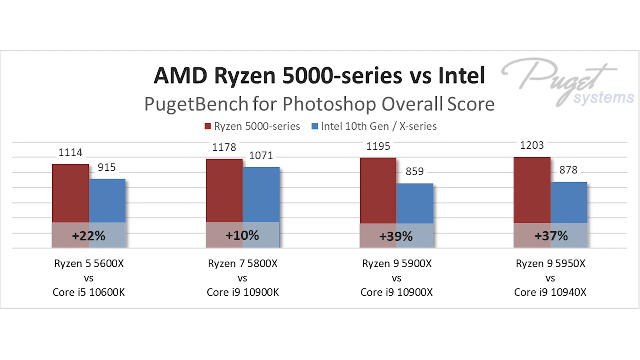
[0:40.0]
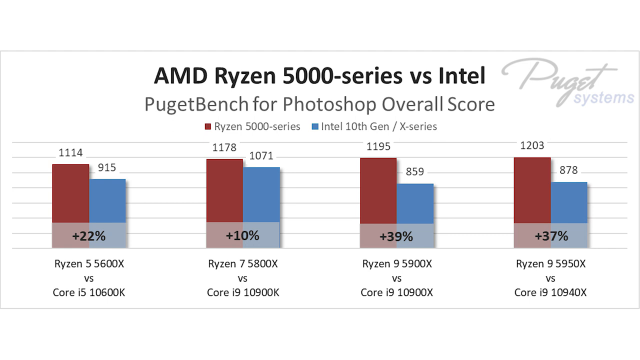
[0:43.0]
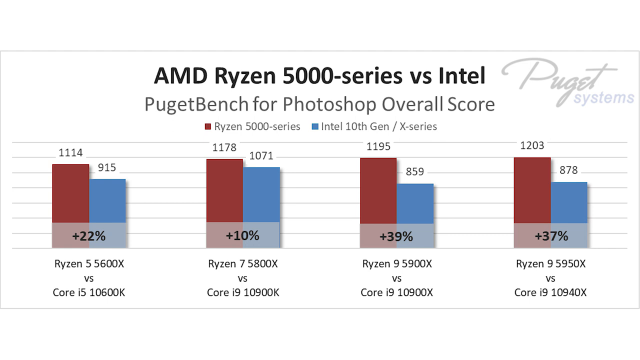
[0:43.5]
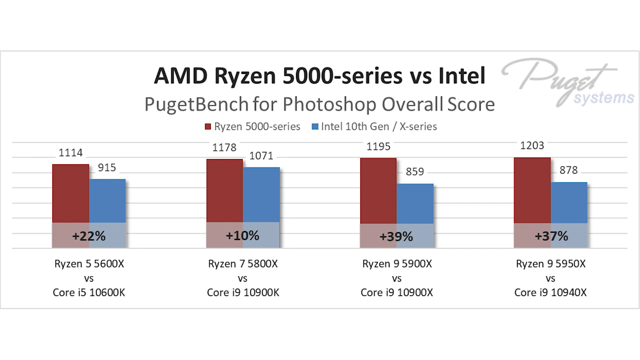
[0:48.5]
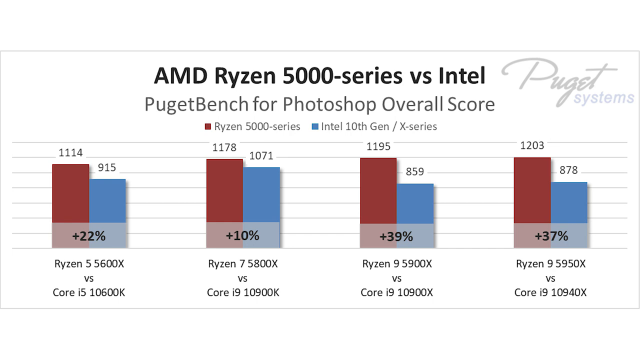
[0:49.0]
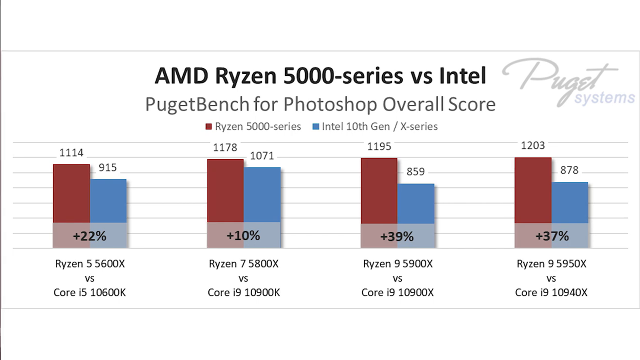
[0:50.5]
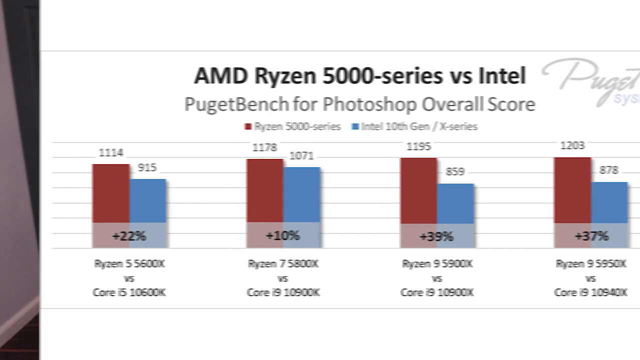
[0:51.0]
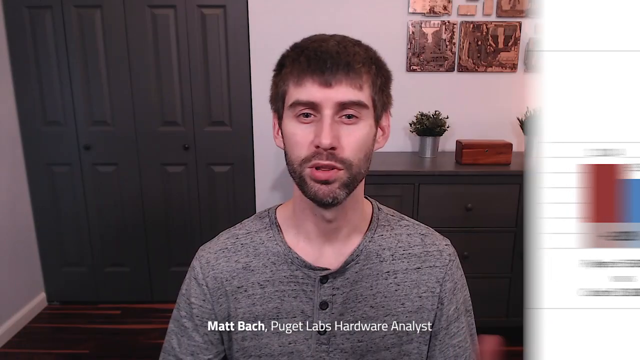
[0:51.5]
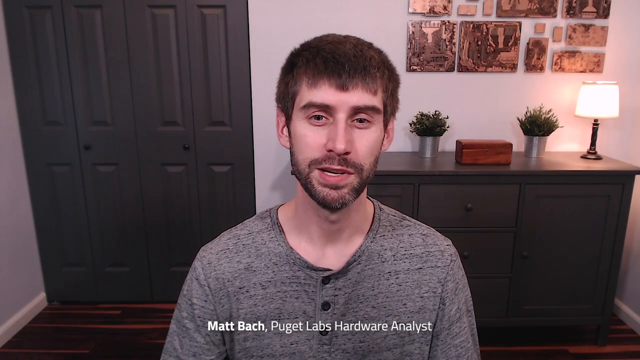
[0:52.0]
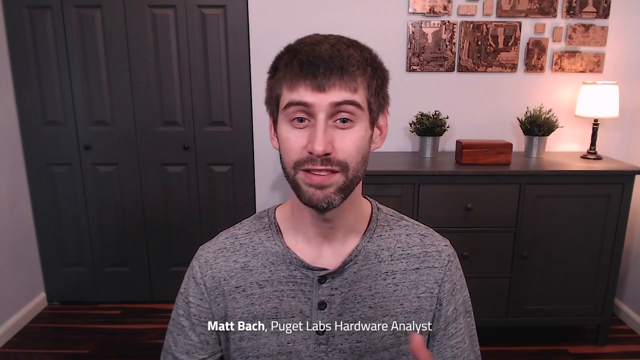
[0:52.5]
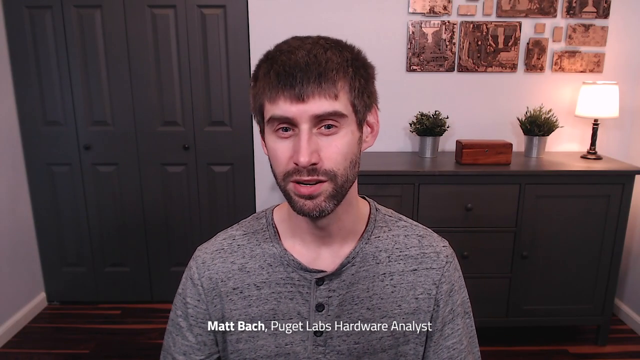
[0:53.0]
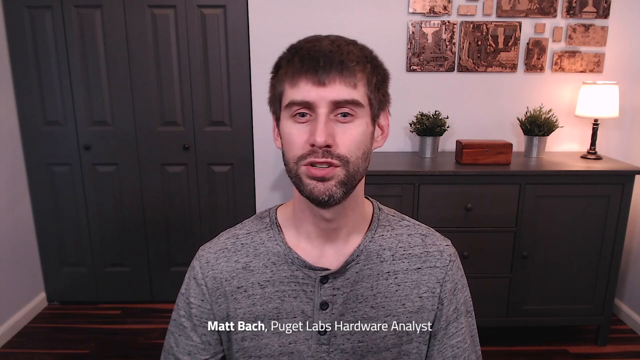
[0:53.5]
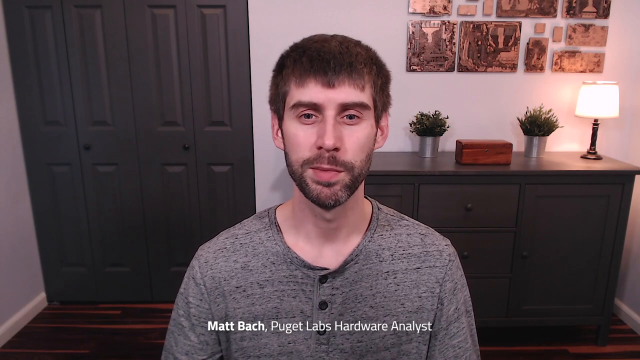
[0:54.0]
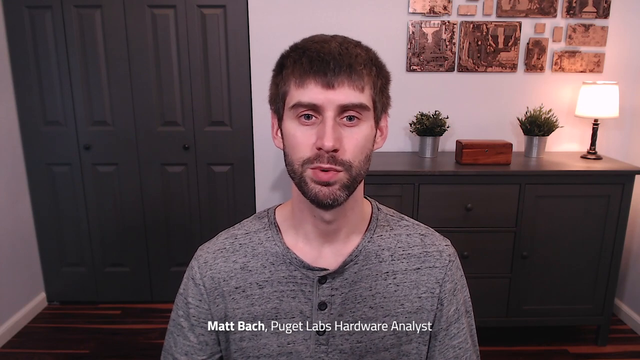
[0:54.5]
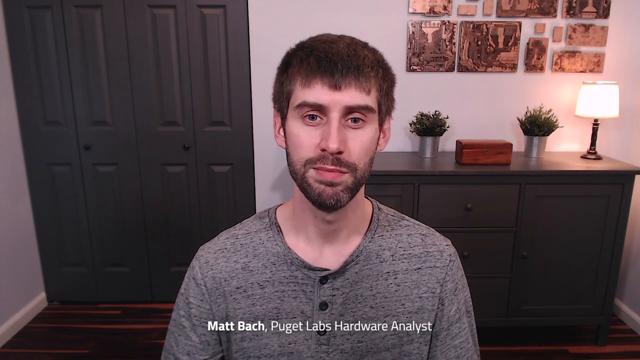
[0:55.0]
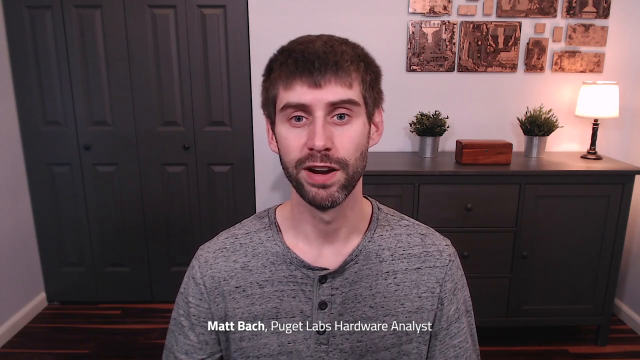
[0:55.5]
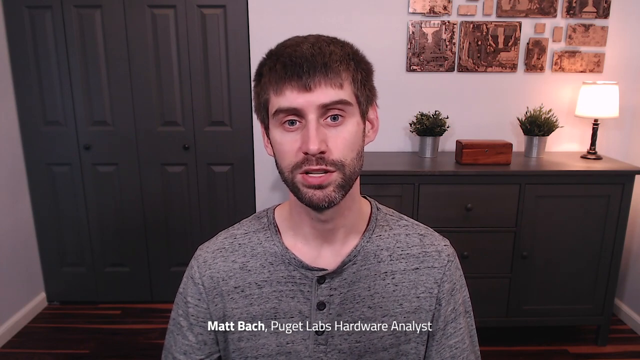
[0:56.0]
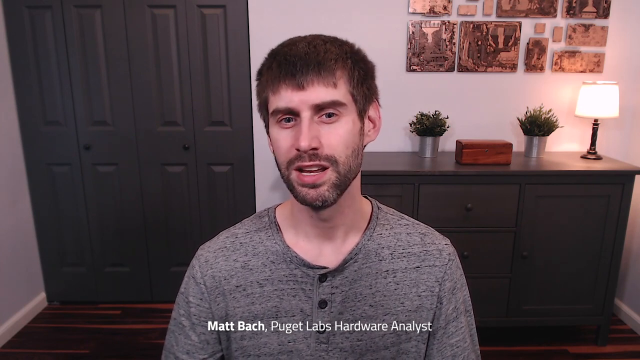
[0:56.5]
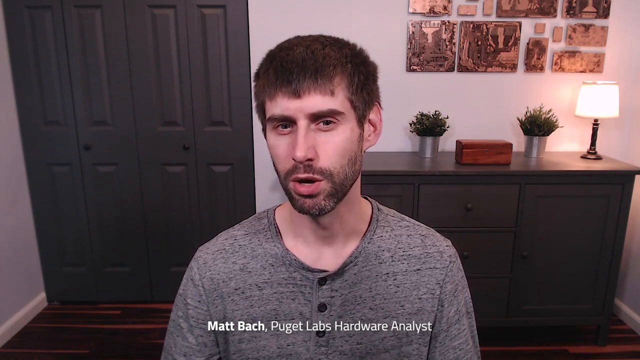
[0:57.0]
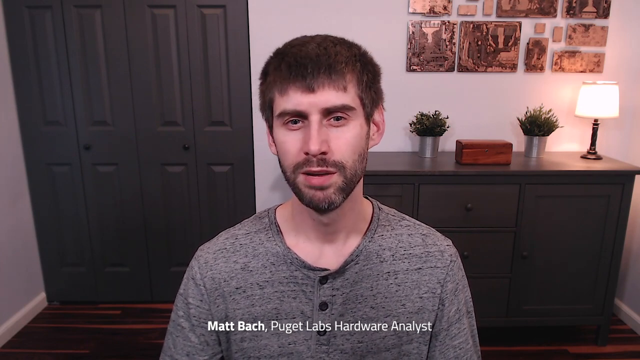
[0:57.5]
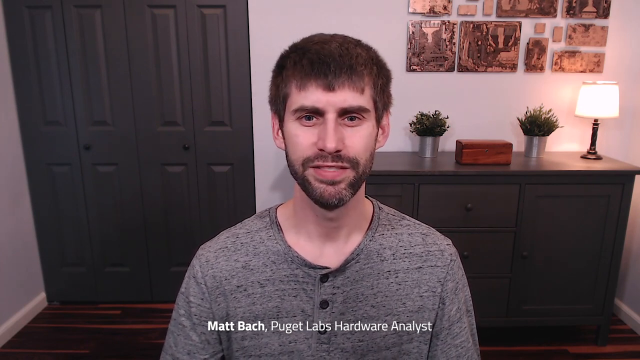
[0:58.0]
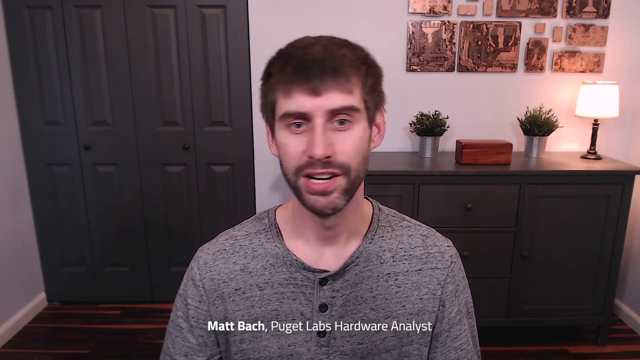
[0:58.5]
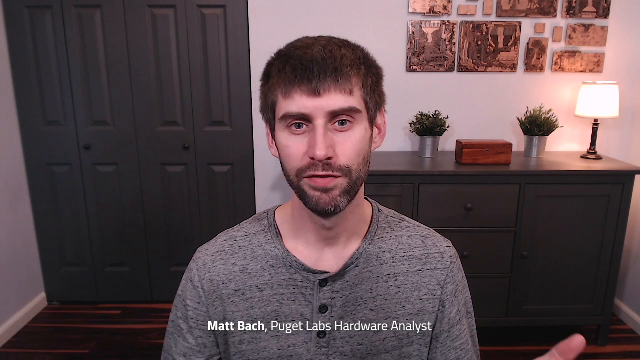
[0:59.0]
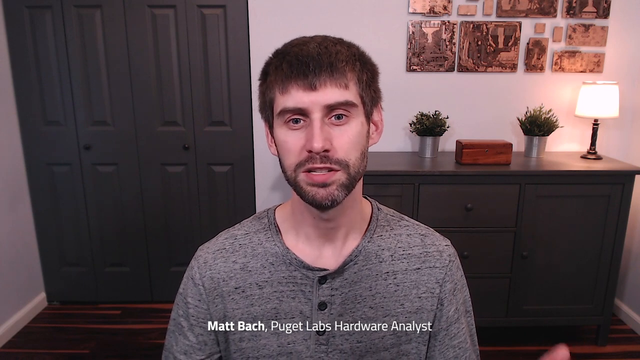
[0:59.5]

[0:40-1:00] The white man sits in his home office, a cozy setting surrounded by tech gadgets and screens, reviewing the AMD Ryzen 5000 series processors and their performance in Adobe Photoshop. He shows graphs comparing these processors to Intel, with the Ryzen 5000 series showing high performance increases. He seems excited. A close-up of the screen shows software interfaces and performance metrics.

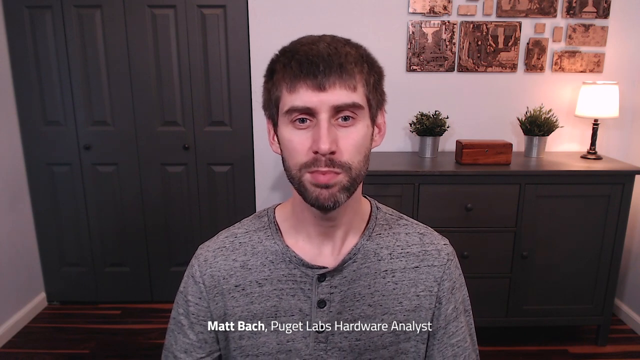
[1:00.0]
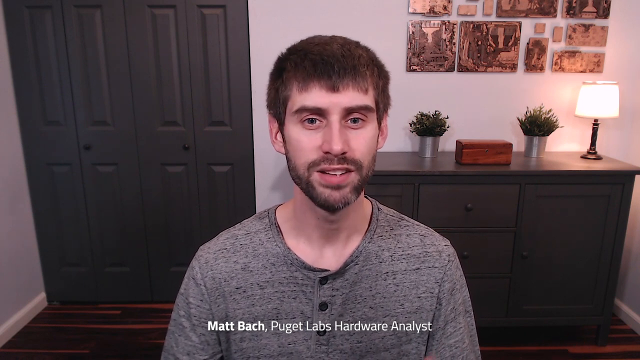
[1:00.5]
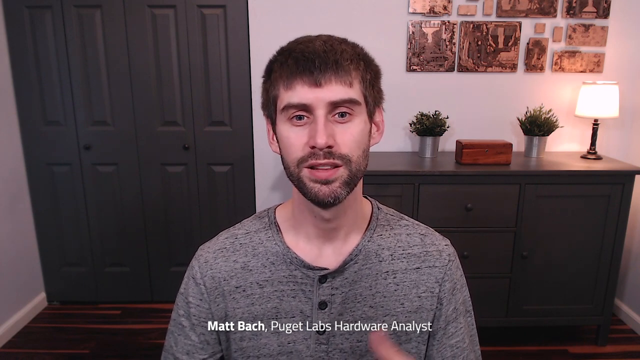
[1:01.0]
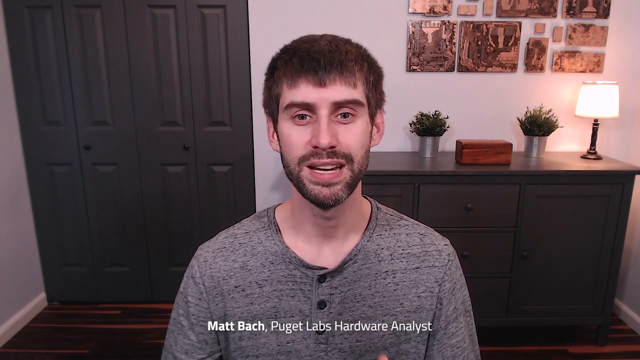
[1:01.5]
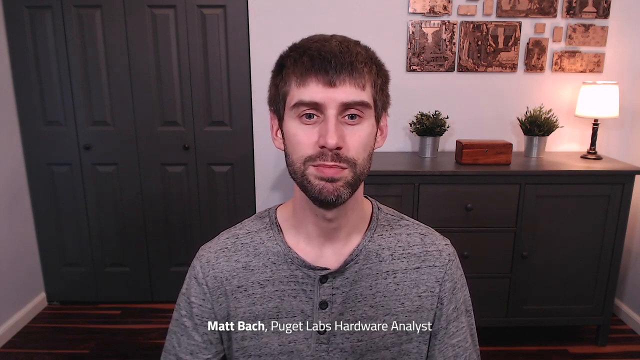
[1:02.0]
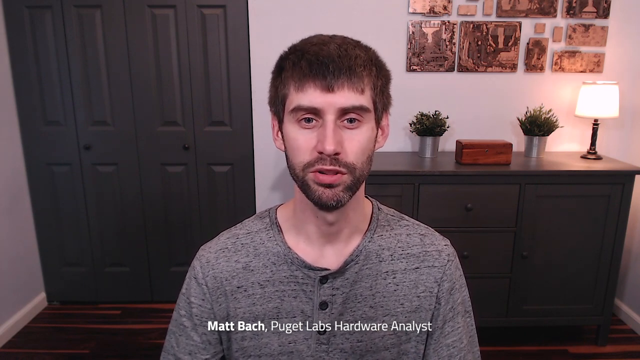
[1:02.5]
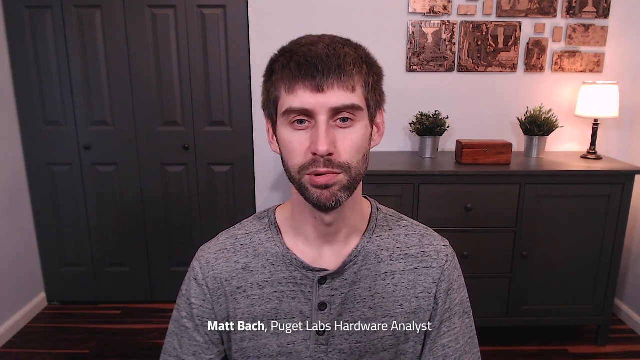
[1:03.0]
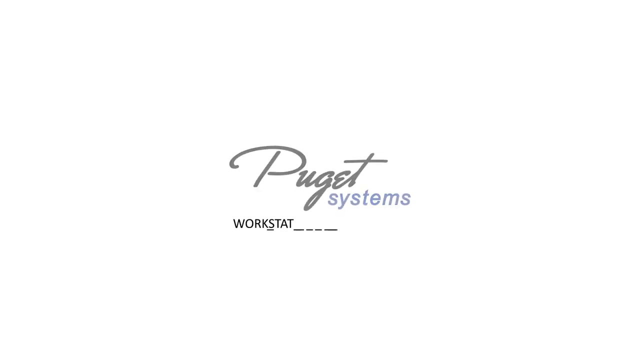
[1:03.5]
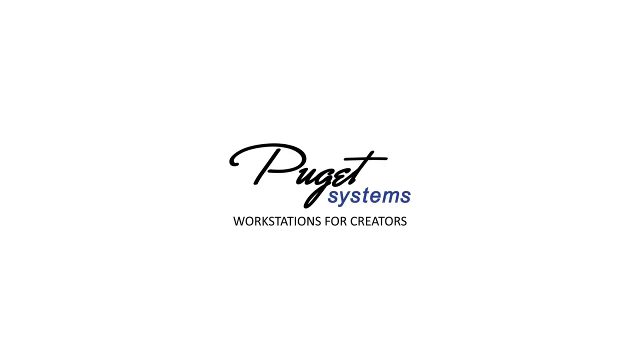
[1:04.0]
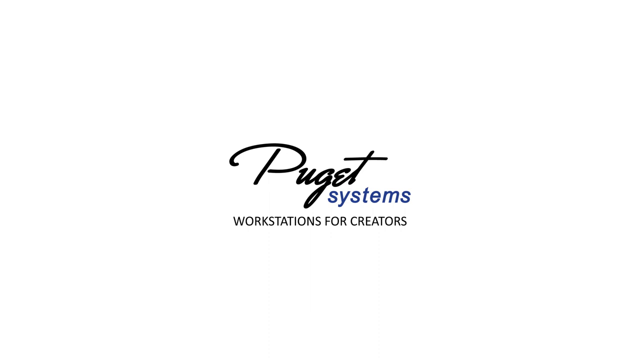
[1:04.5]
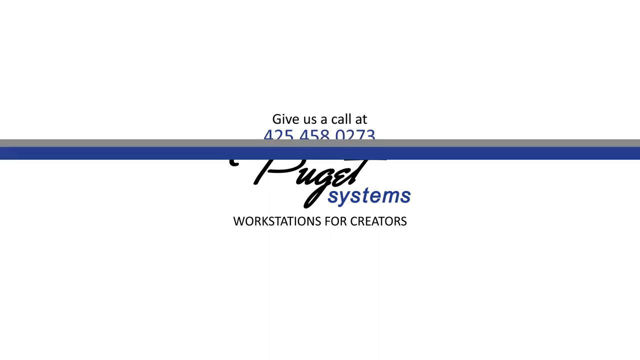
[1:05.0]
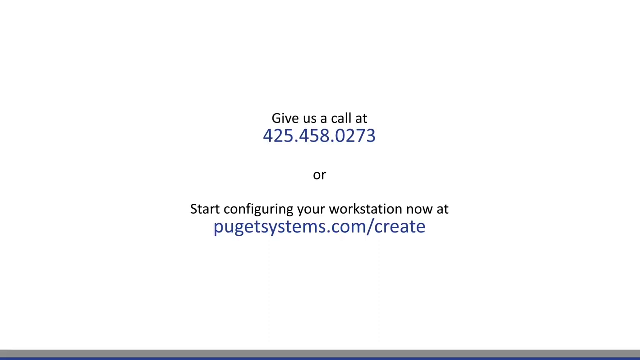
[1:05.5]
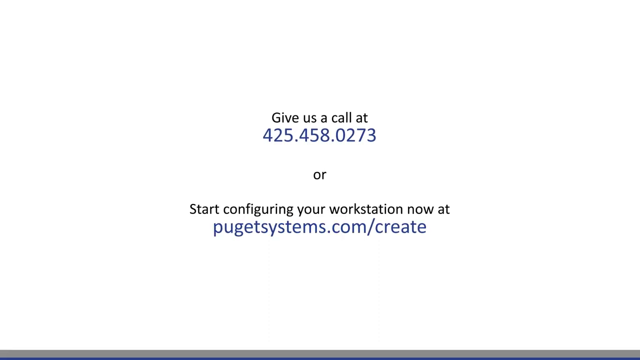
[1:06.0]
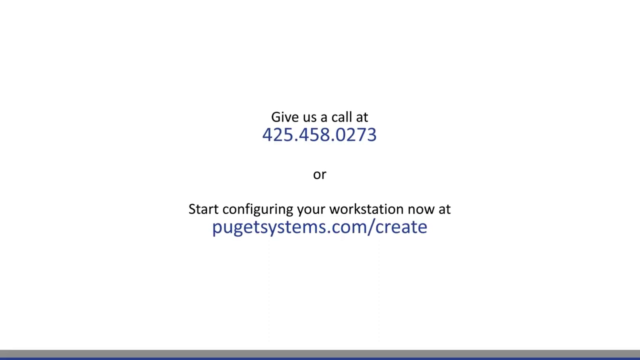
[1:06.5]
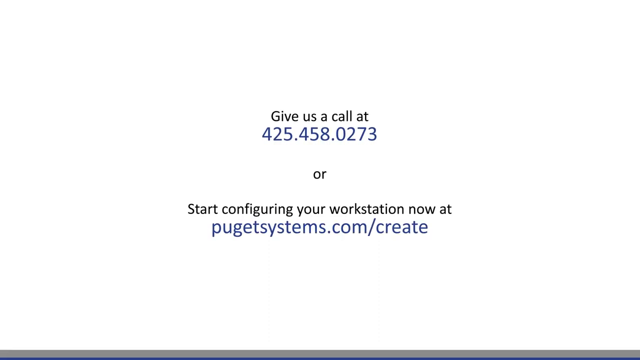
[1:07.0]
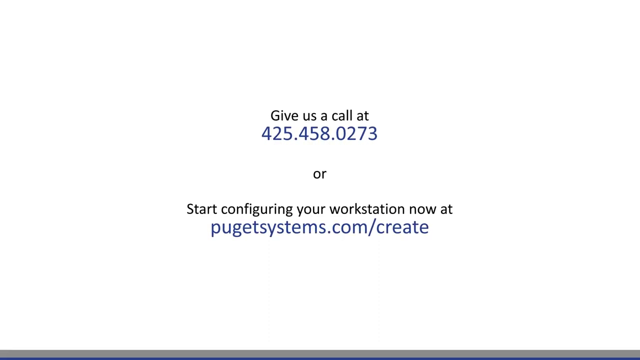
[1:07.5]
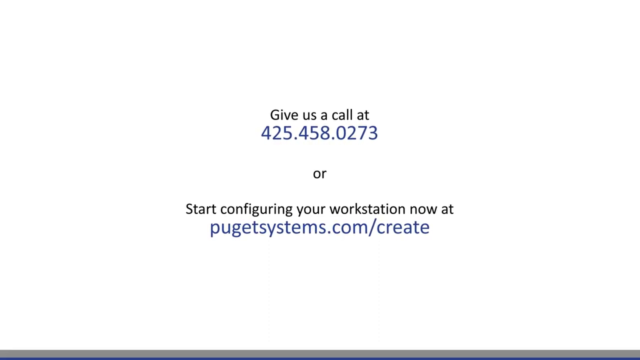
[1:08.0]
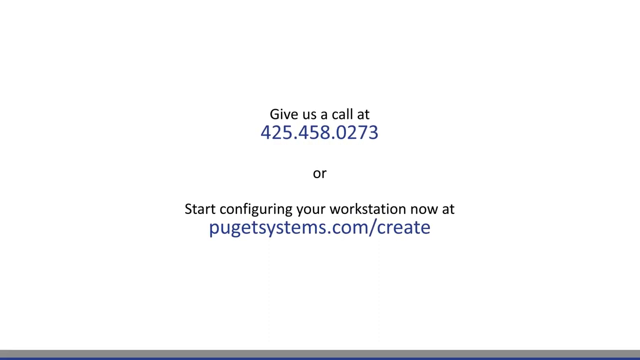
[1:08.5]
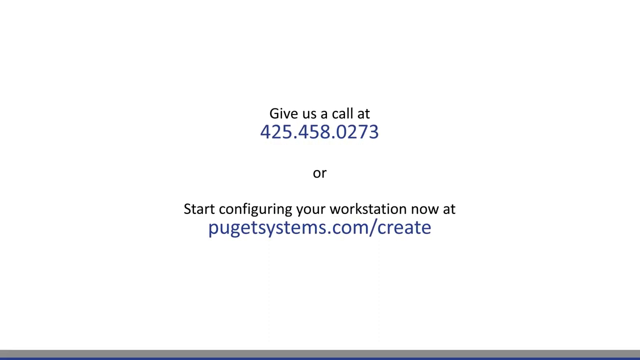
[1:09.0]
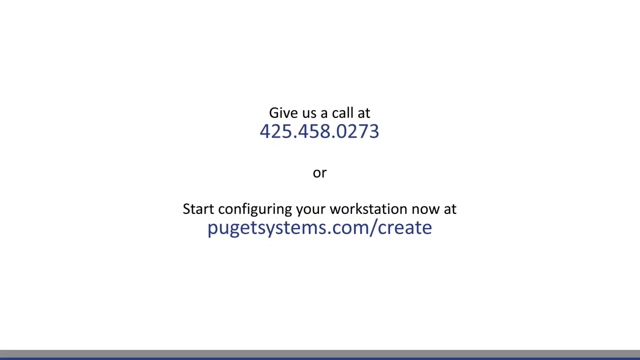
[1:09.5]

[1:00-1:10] The man sits in his cozy home office, reviewing the AMD Ryzen 5000 series processors, specifically their performance in Adobe Photoshop. The graphs he shows highlight how performance has increased over a period of time and the advantages of Ryzen over Intel. He navigates through software interfaces and seems impressed with the results. A close-up of his screen gives a detailed look at the performance metrics. The man seems very passionate about technology.